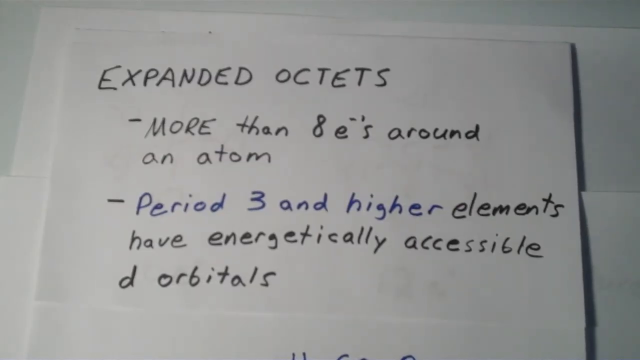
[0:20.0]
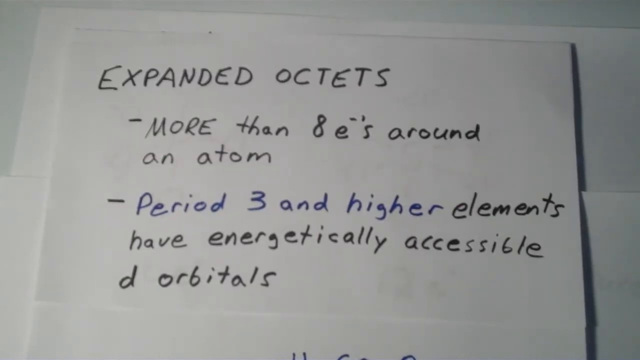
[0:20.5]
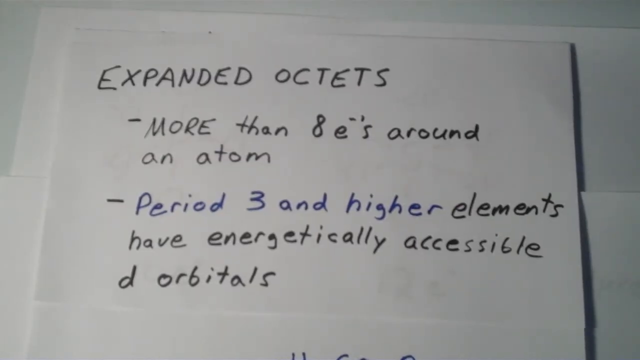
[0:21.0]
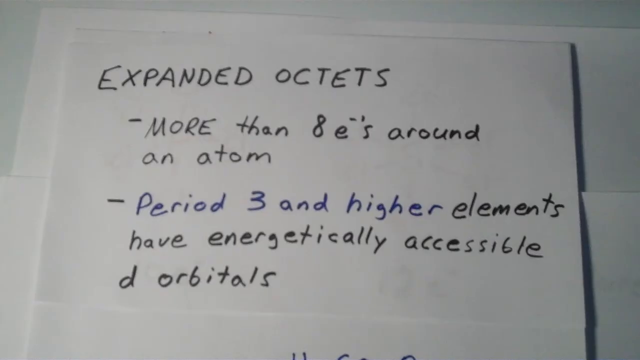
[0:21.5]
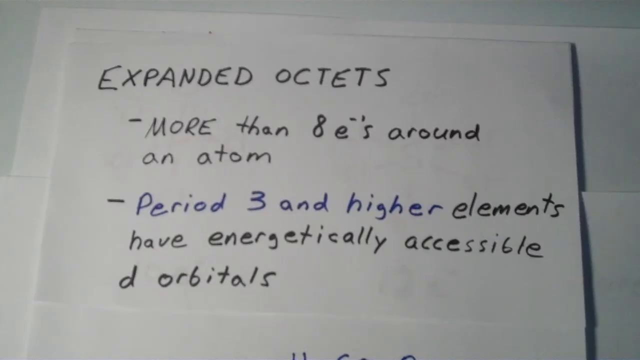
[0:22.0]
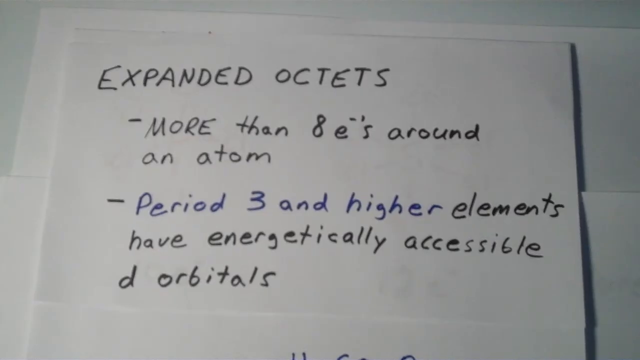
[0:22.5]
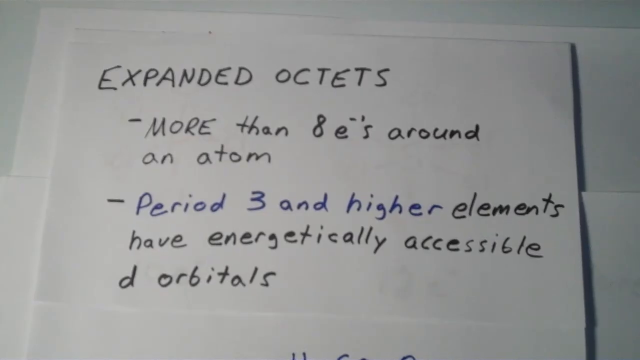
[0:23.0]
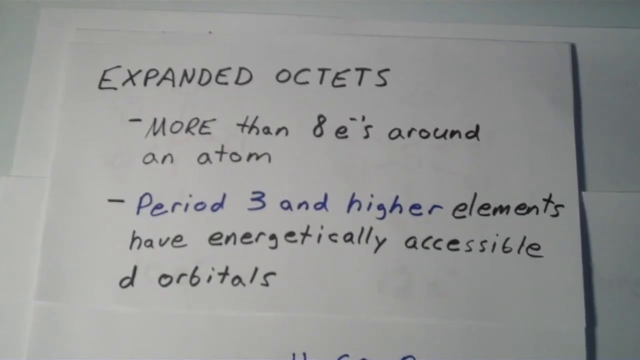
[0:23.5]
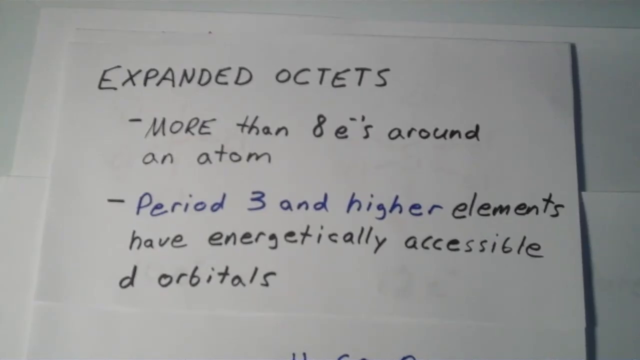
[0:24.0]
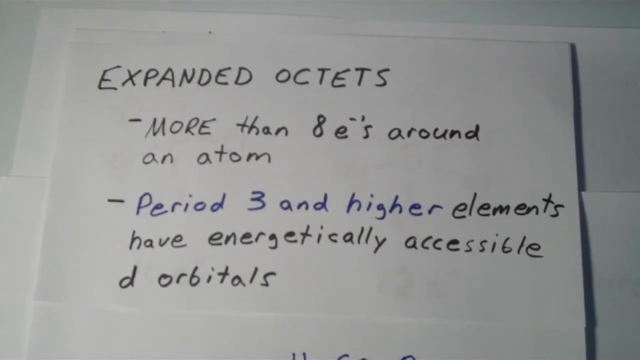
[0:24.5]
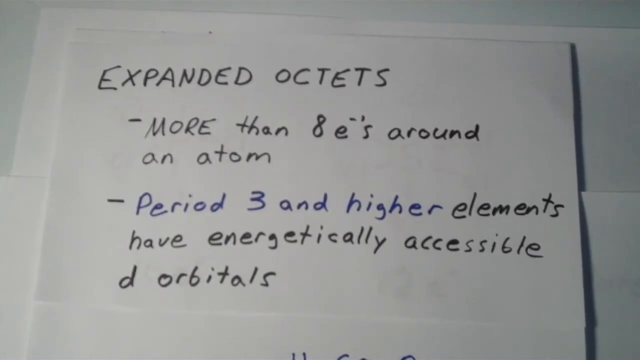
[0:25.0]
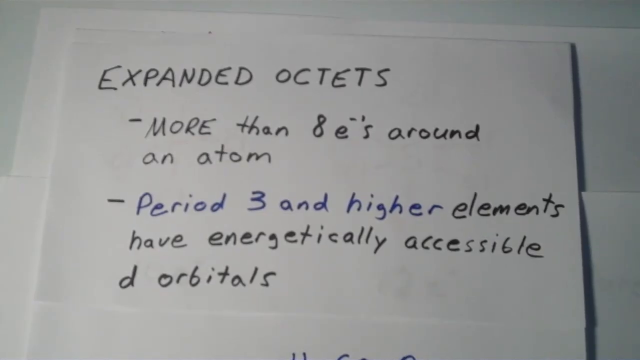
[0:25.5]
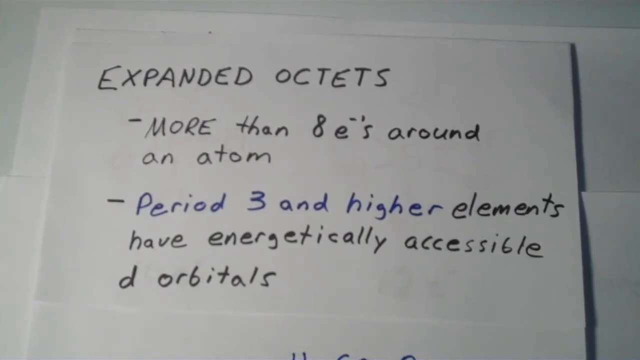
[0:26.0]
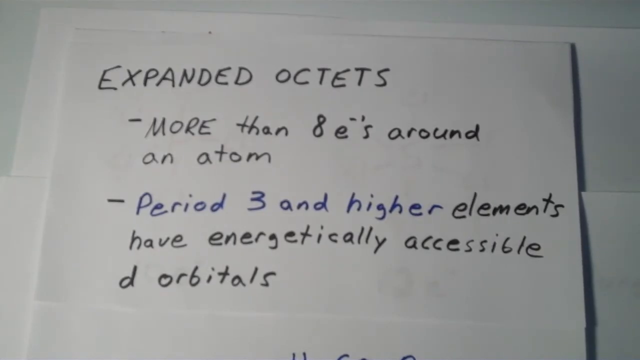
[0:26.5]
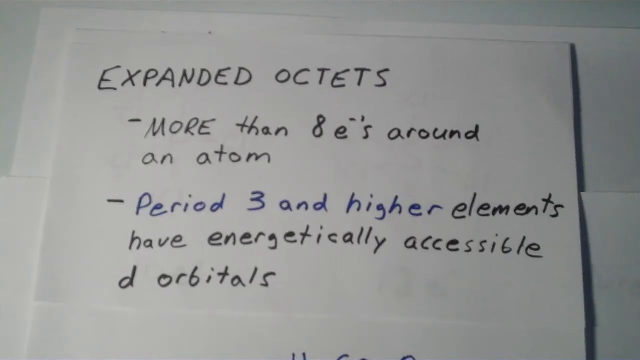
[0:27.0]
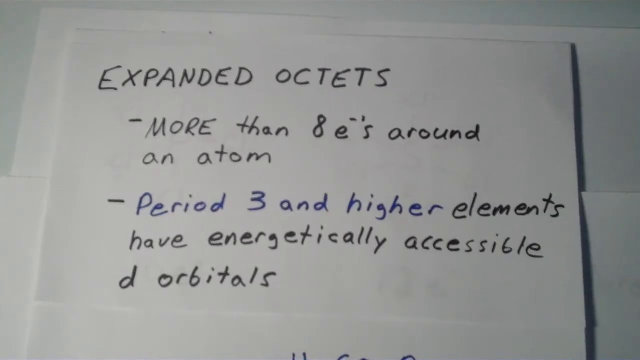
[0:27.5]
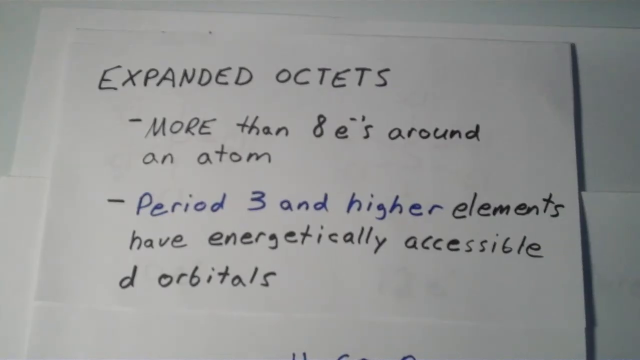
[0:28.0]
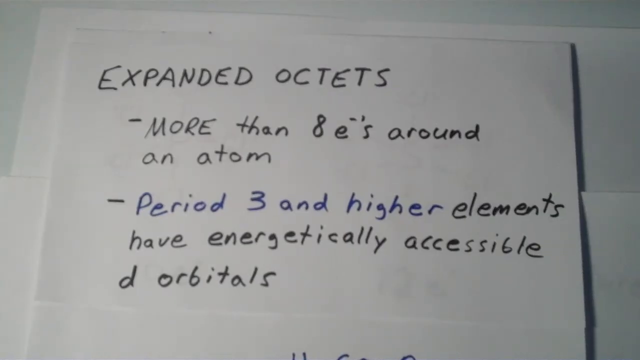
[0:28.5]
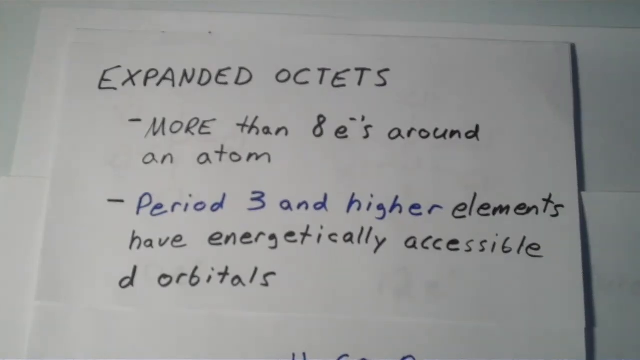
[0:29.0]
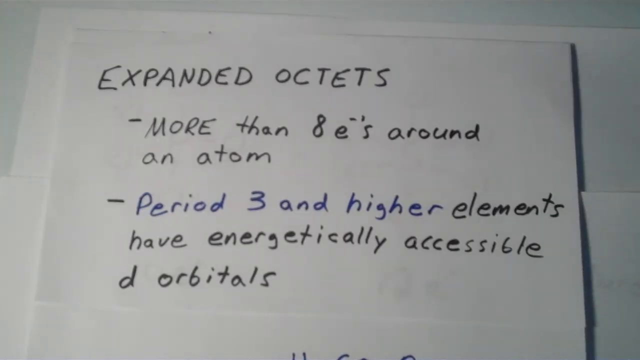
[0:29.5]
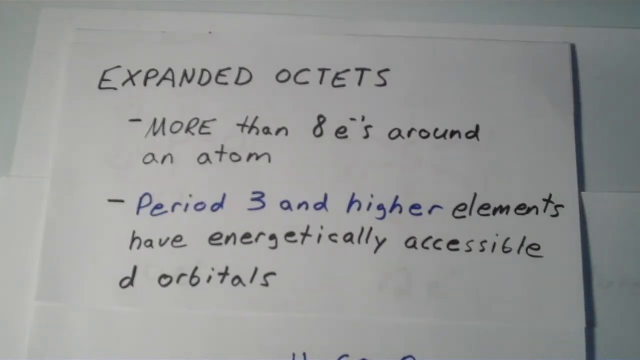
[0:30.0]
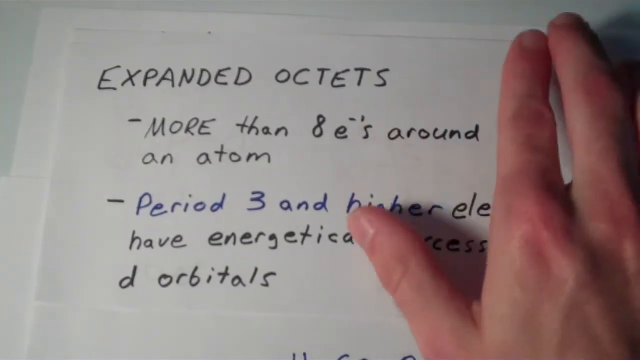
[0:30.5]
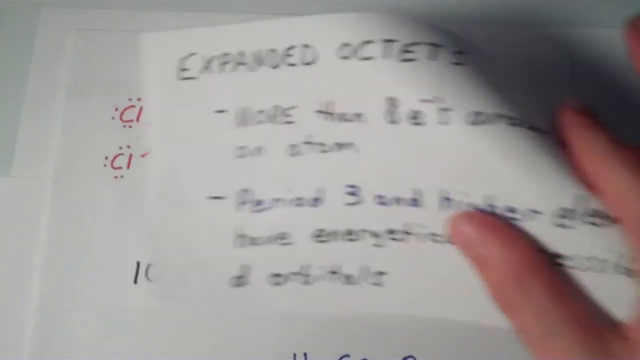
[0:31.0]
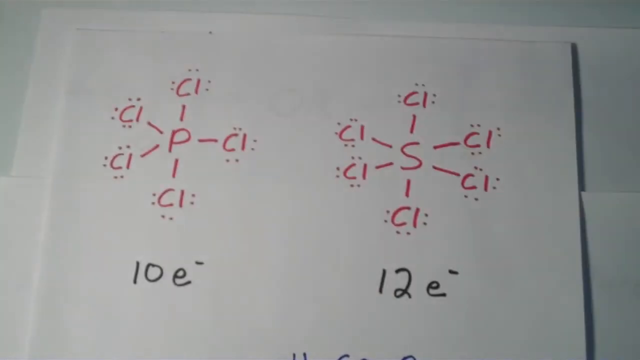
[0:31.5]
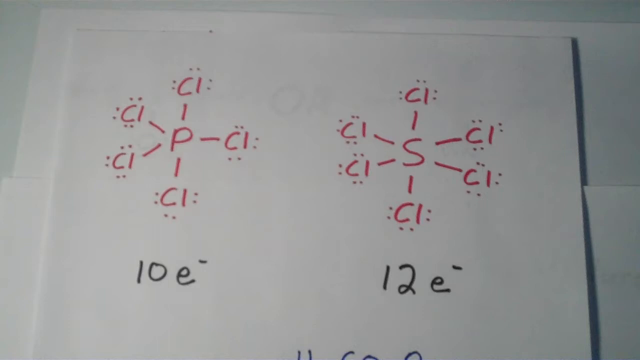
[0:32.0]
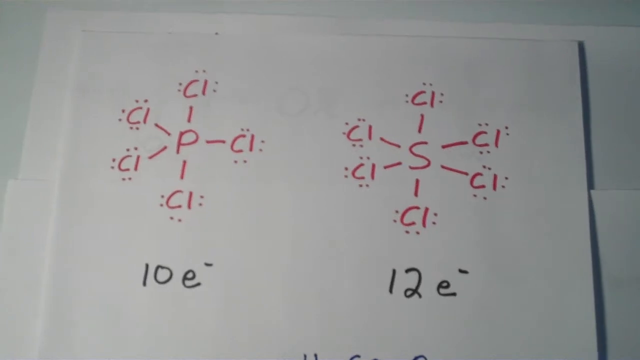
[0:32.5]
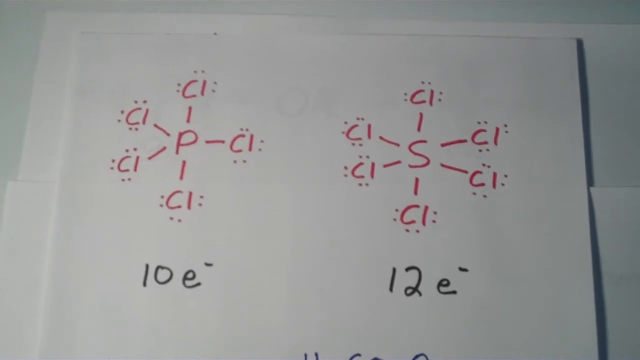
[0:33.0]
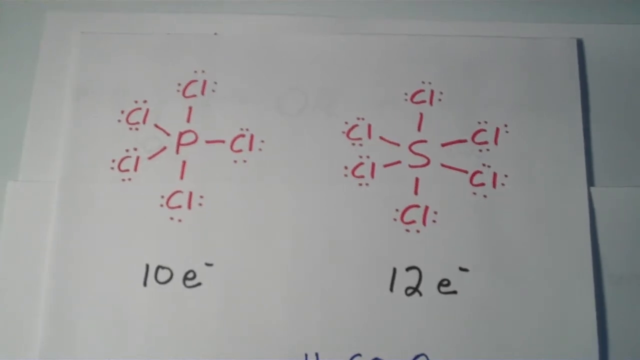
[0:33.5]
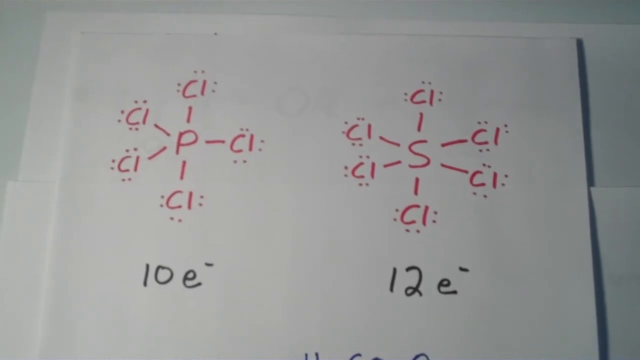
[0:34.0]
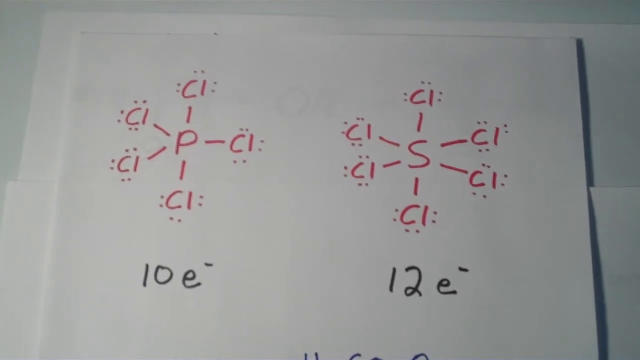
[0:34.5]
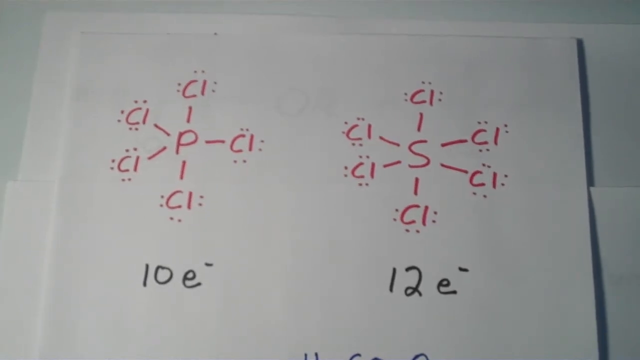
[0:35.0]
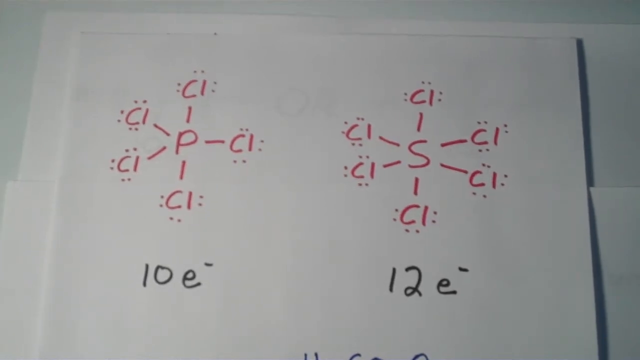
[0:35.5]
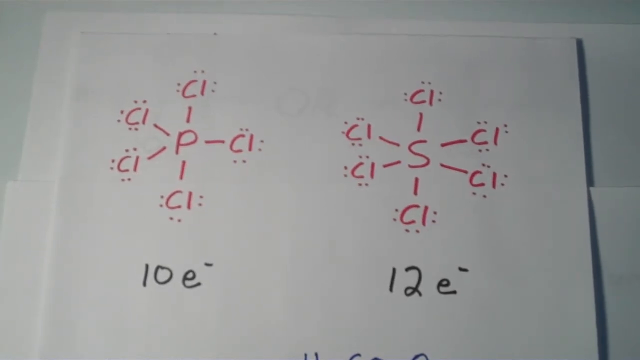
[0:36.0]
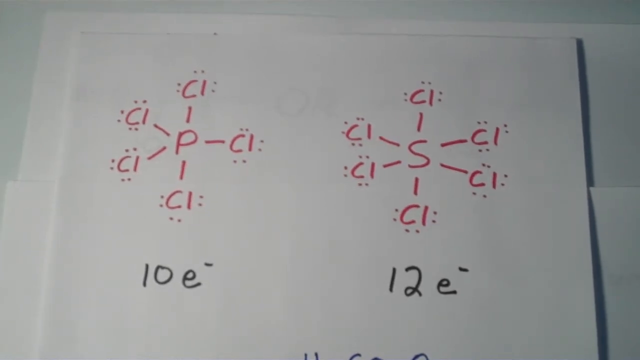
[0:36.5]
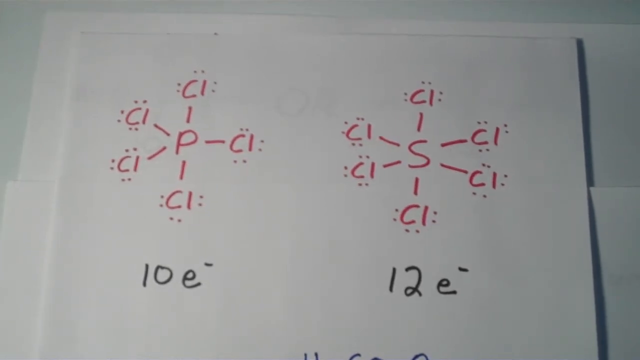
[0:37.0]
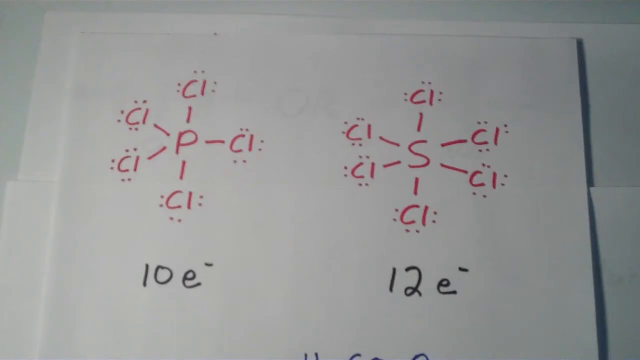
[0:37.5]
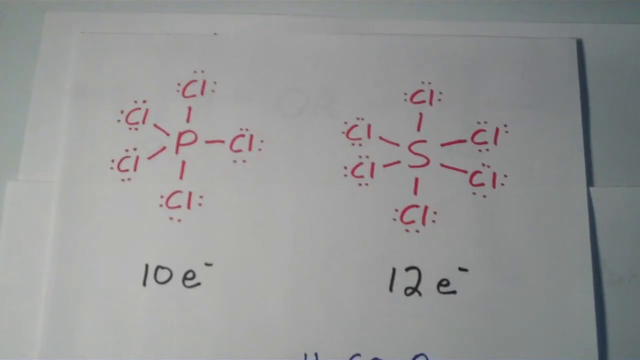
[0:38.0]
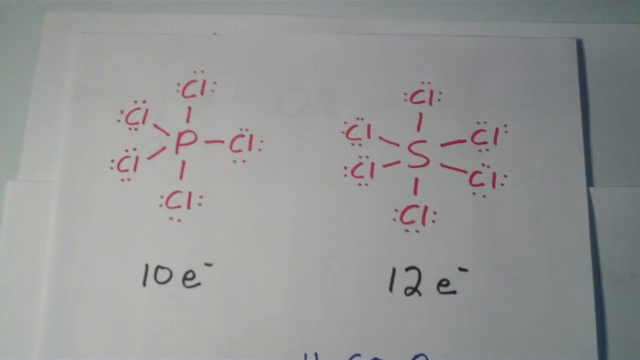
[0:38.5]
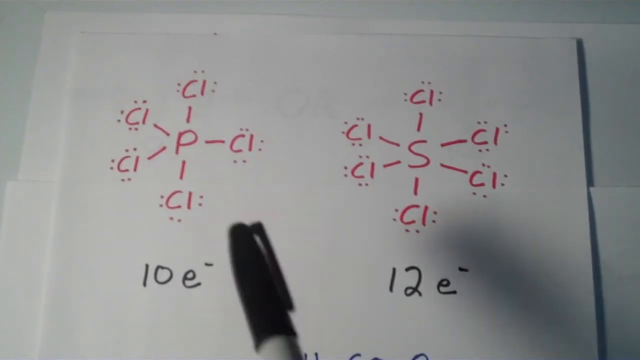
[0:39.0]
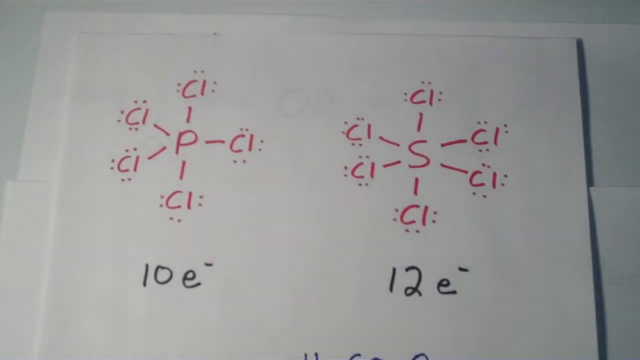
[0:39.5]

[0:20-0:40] The same white page remains on screen until the host's hand appears; the hand looks very light-skinned. The host flips the page. The next page, also white paper, shows orbital sketches of the Lewis structures of two molecules, phosphorus pentachloride (PCl5) and sulfur hexafluoride, drawn in red, along with their electron orbitals, and indicates the number of valence electrons around the central atom in each case. The left molecule has 10 electrons and the right one has 12. The view stays on this page, and the instructor points at the left molecule.